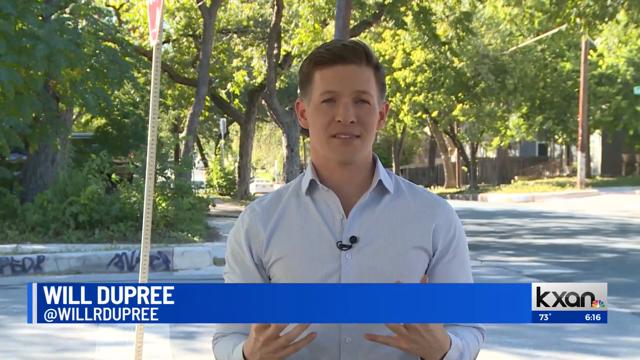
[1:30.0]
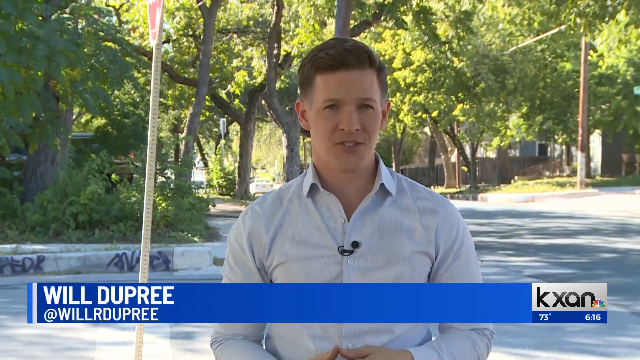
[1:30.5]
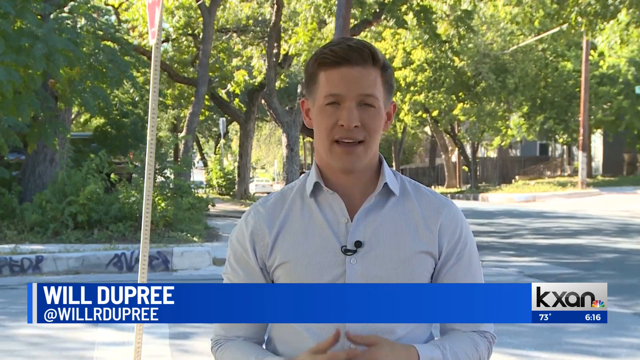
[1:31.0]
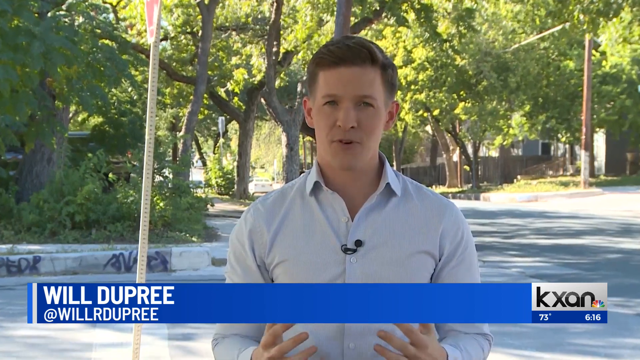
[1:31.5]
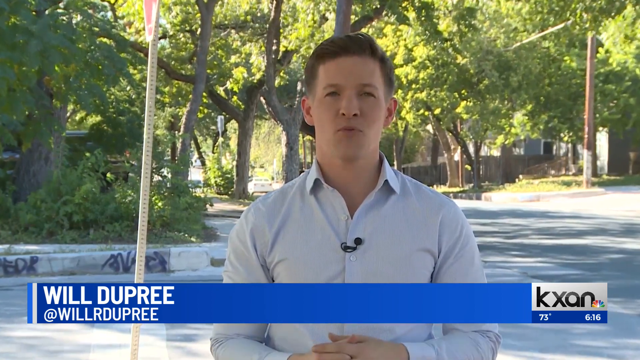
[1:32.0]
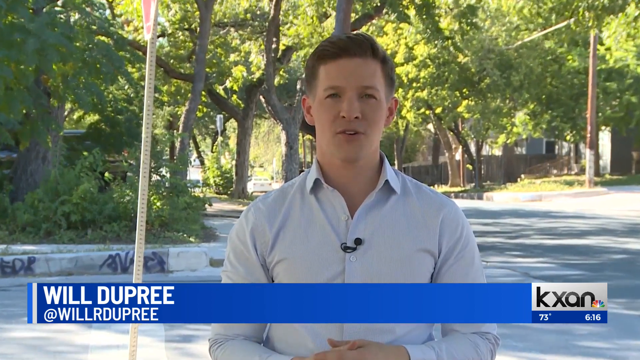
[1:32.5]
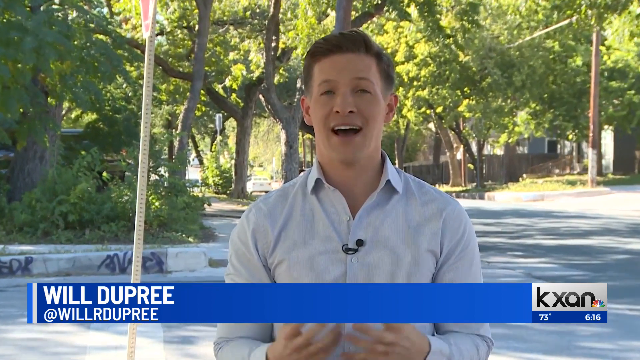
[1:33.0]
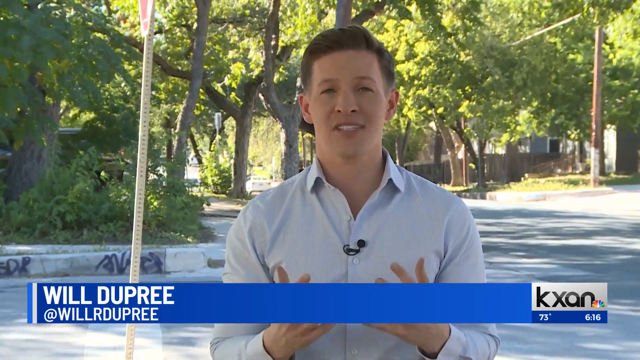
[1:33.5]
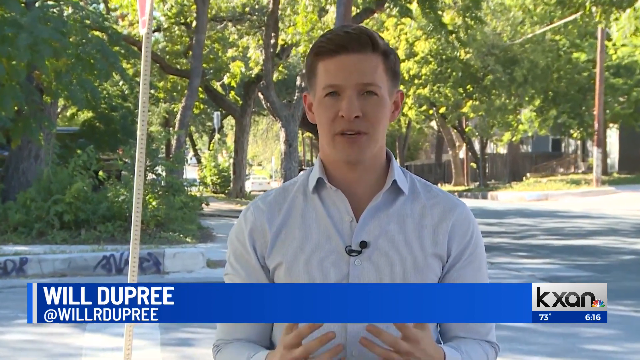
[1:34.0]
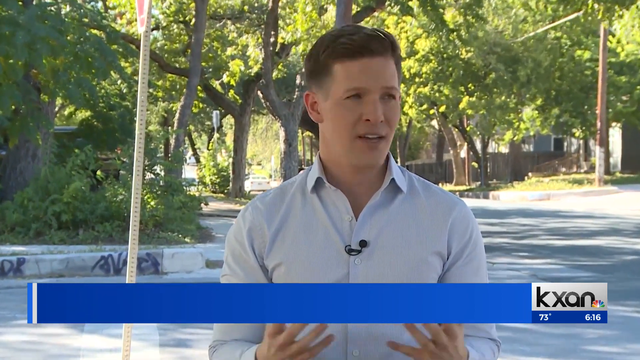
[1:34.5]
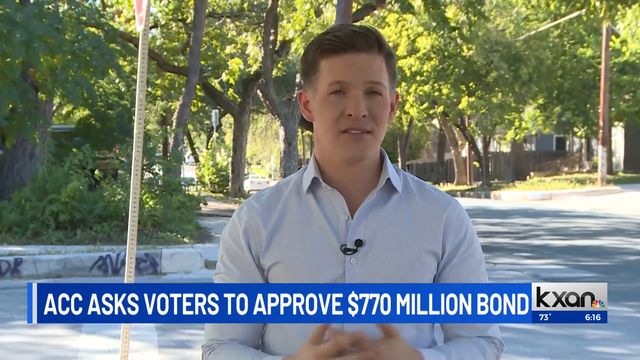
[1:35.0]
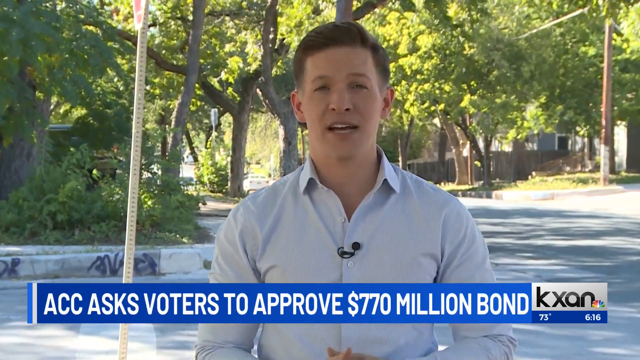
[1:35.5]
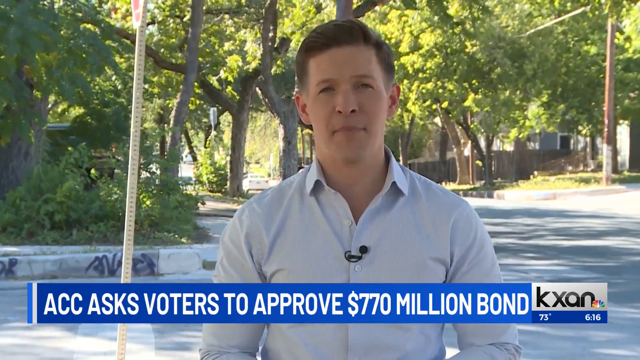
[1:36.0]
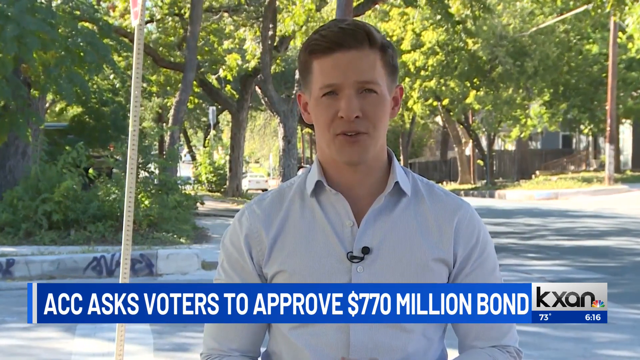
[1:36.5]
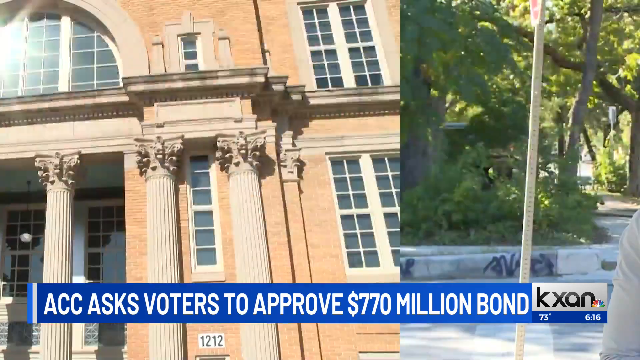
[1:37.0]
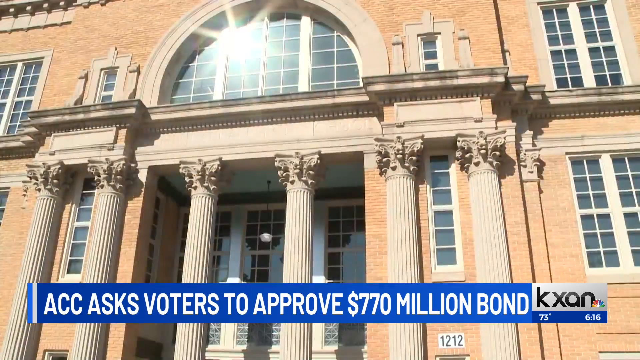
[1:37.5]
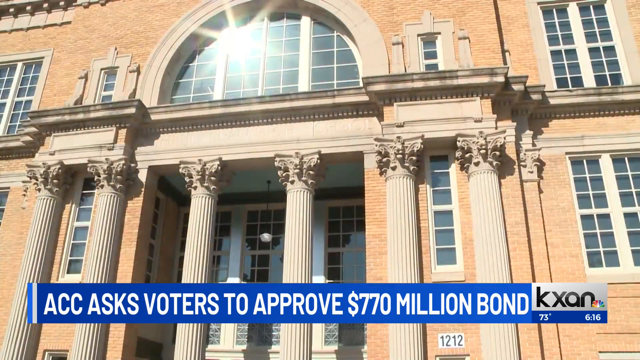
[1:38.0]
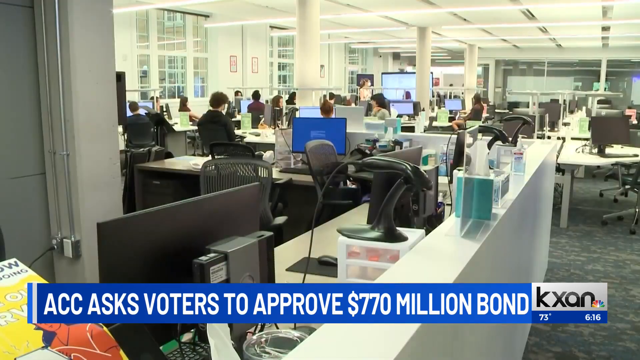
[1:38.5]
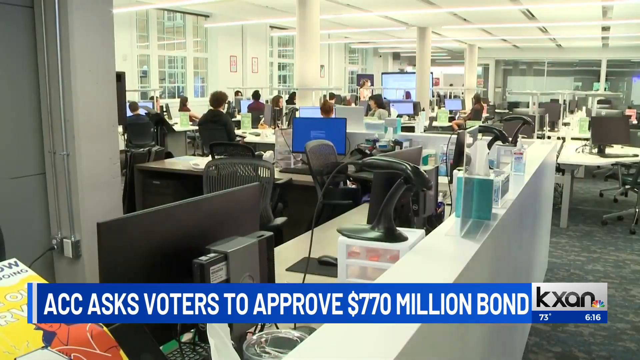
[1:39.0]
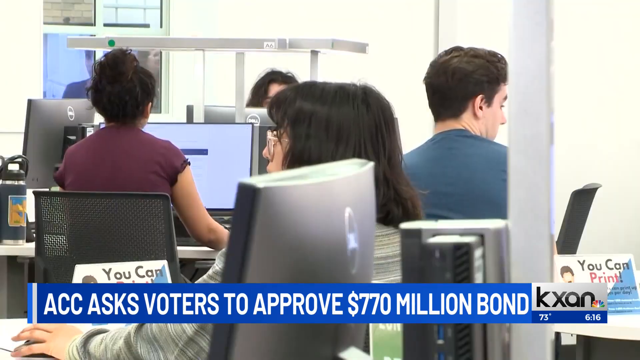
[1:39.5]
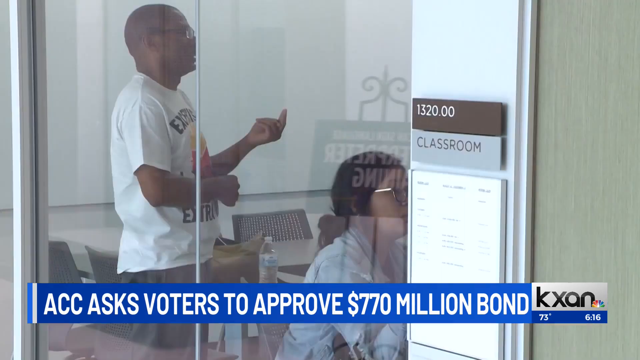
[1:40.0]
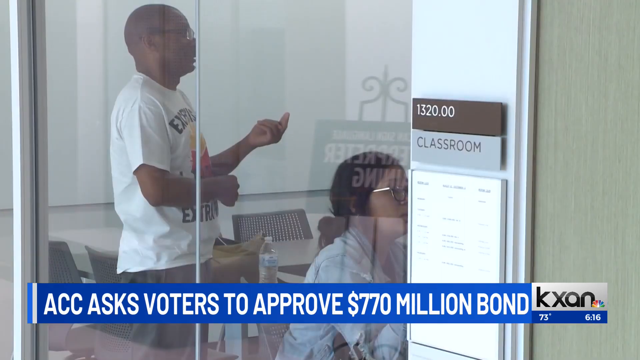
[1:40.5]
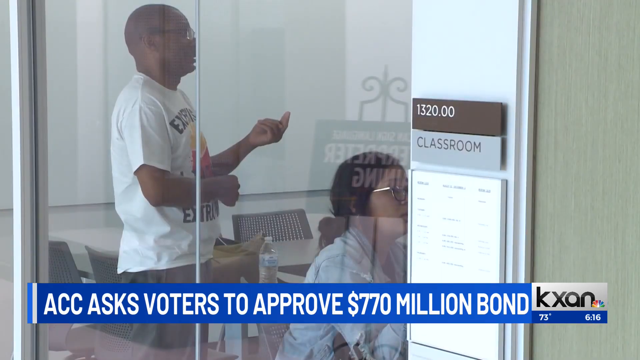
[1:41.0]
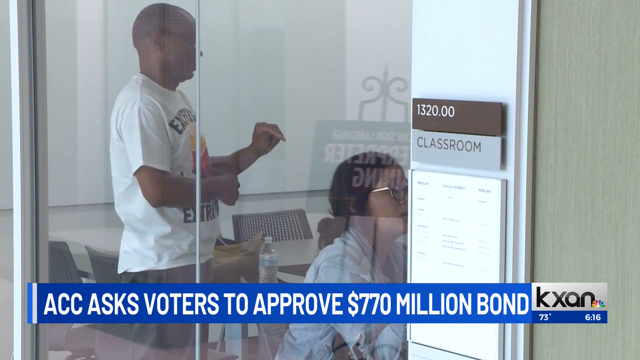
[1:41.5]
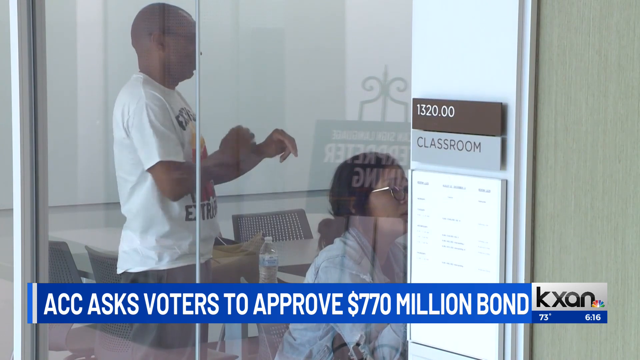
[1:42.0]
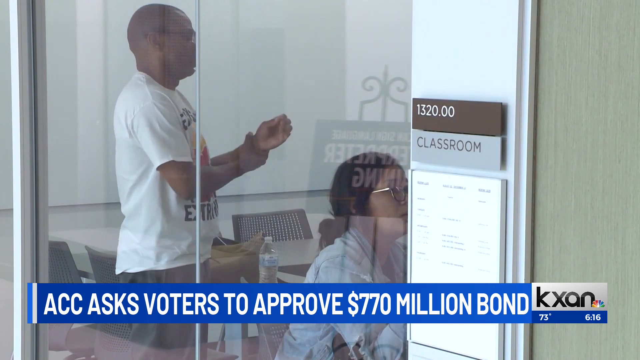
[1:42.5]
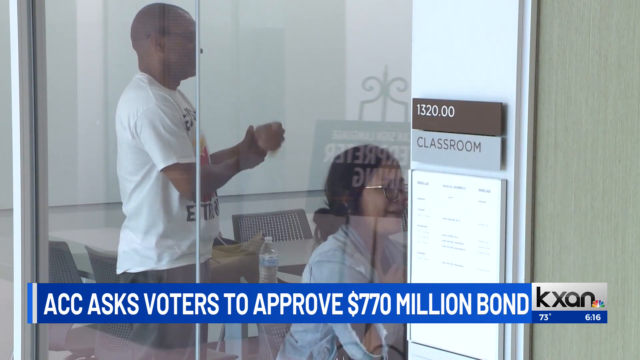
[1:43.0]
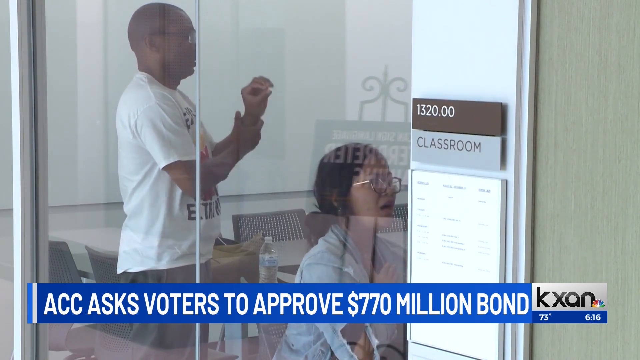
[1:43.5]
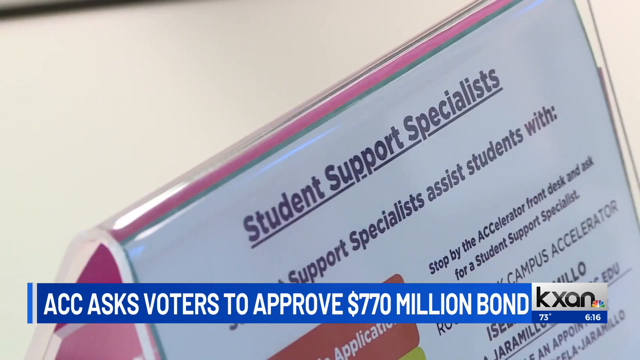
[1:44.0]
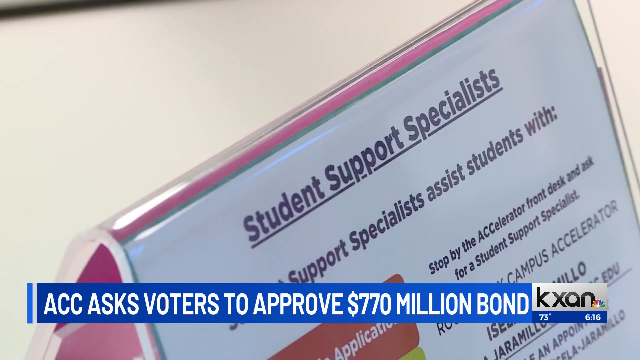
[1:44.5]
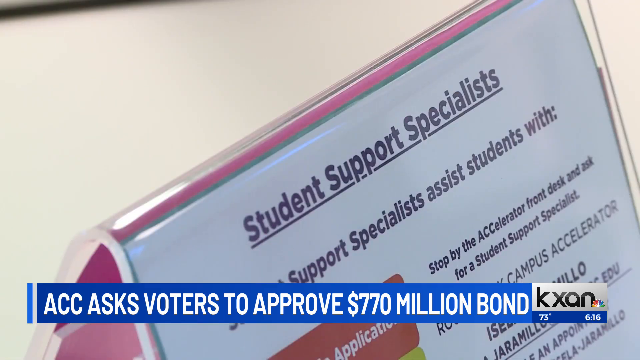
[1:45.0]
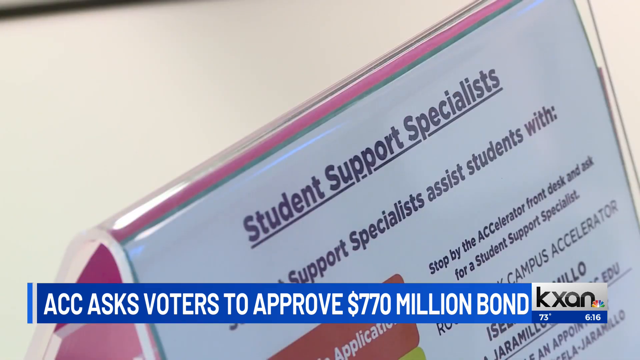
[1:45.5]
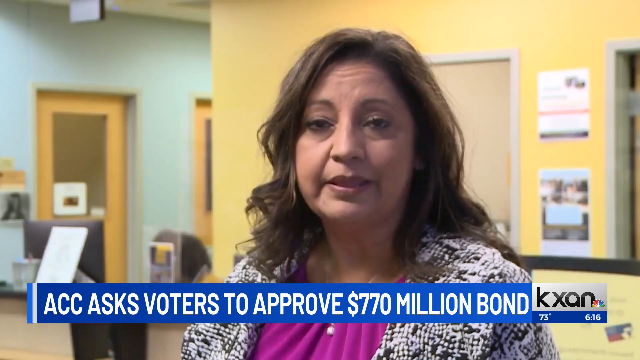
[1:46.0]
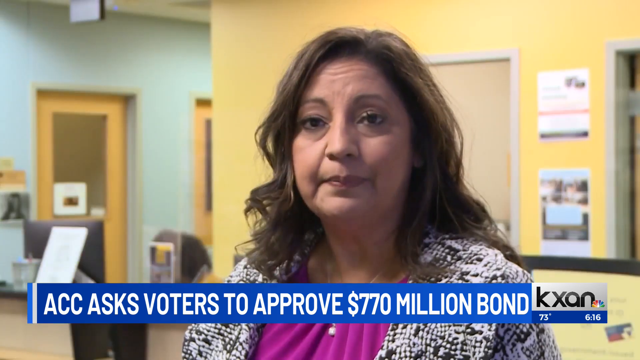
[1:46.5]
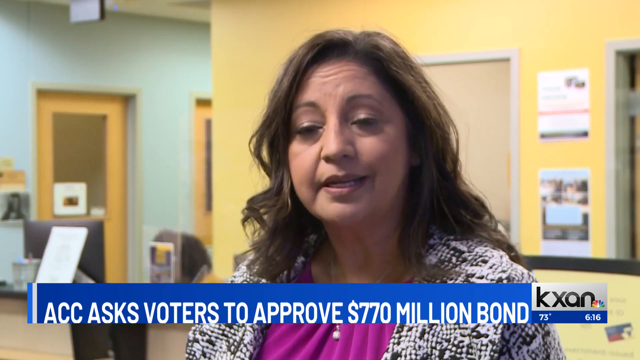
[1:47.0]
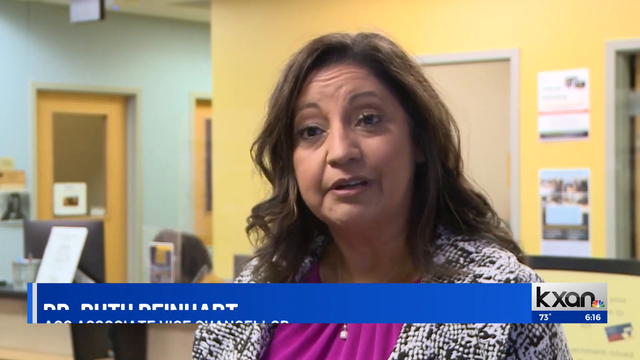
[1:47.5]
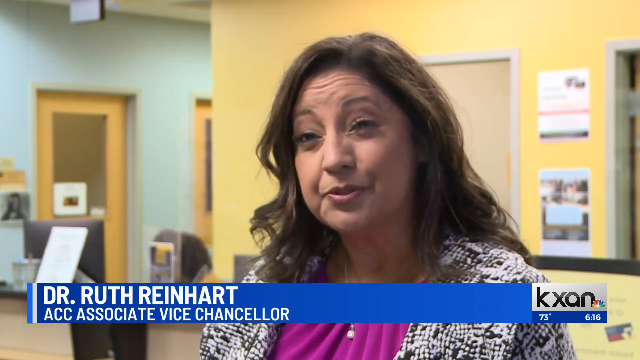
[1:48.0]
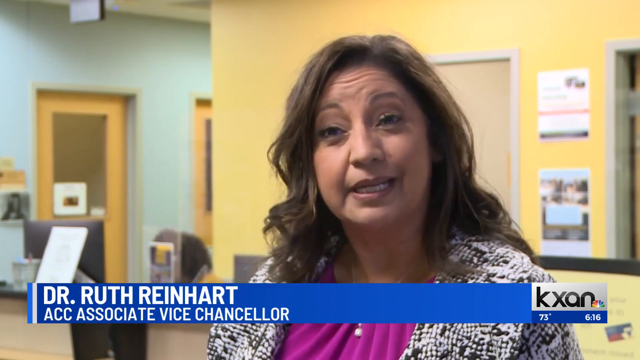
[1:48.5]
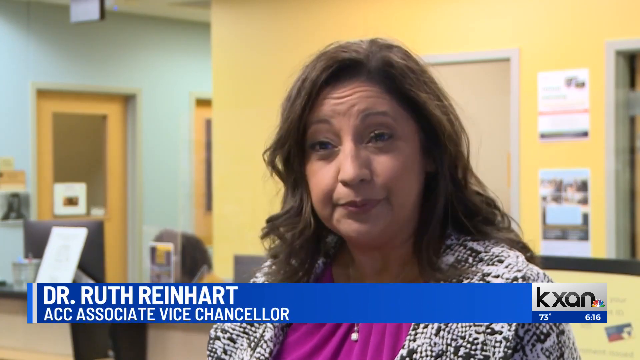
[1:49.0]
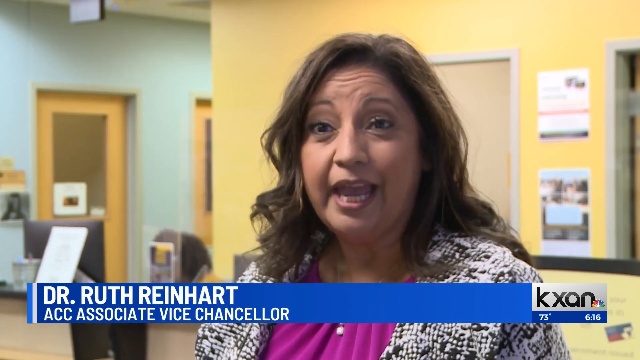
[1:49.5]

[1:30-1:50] Outdoors, among a lot of trees in what may be a park, a tight shot shows a male reporter speaking for the newscast. The sticker beneath him reads "Will Dupree," with "at Will R. Dupree" underneath. To the right of that blue sticker are the news station's call letters KXAN and the peacock symbol, with the weather, 73 degrees, and the time, 6:16, beneath. As the reporter talks to the camera, another sticker pops up reading "ACC ask voters to approve 770 million dollar bond" in all capital letters. The scene moves indoors to a classroom. A classroom sign outside reads "1320 00" and "classroom." Through plexiglass, two people are visible in the room, and one person is signing, like sign language. Next, a tight shot of a desk shows a sign that says "student support specialist," with text reading "Student support specialists assist students with" and "ask a student support specialist." Then a tight shot shows a woman speaking to the camera in an office with yellow and green walls; the sticker beneath her reads "Dr. Ruth Reinhart," "ACC associate vice chancellor." The shot returns outdoors to the reporter Will Dupree talking to the camera, then shows the front facade of a brown building with large windows and big arches, and then what looks to be a classroom of people.